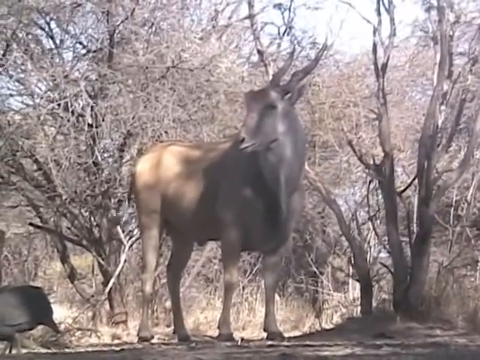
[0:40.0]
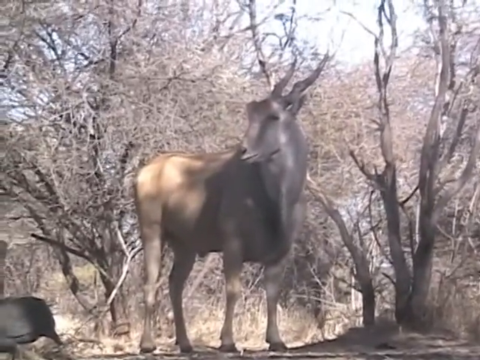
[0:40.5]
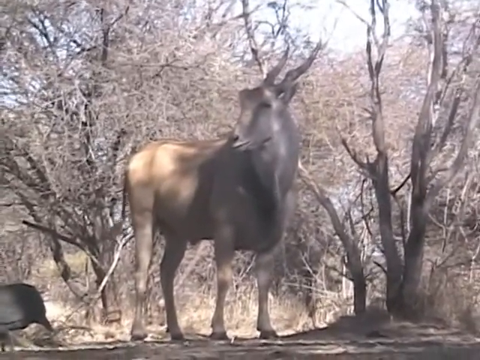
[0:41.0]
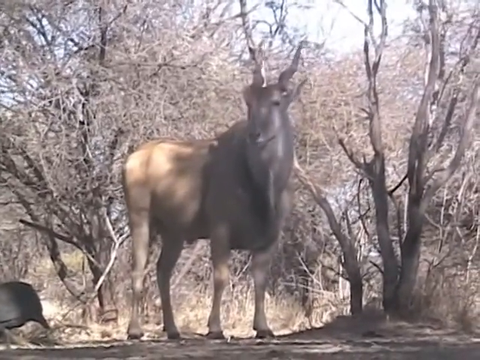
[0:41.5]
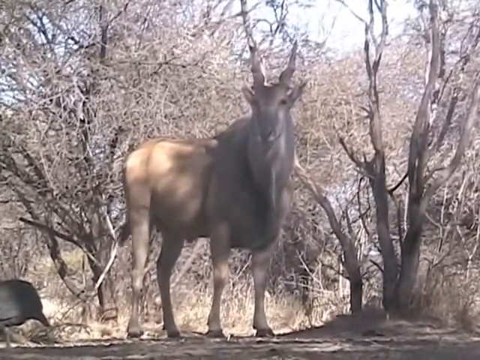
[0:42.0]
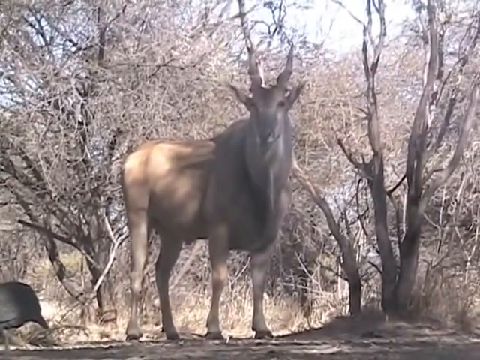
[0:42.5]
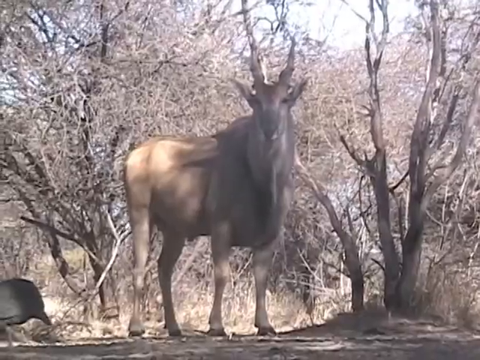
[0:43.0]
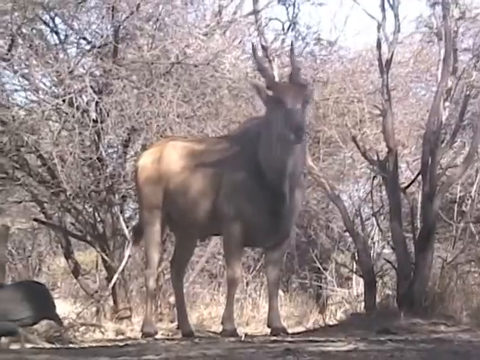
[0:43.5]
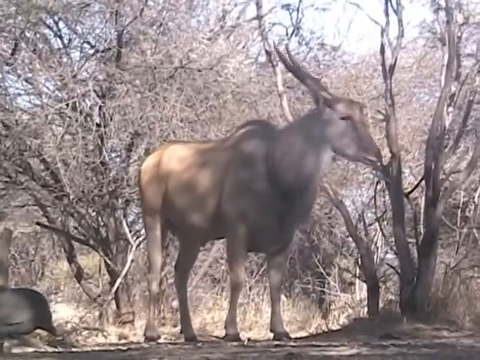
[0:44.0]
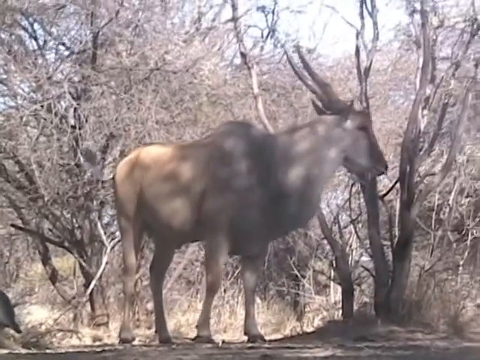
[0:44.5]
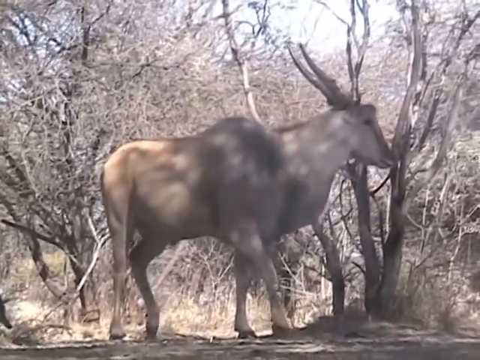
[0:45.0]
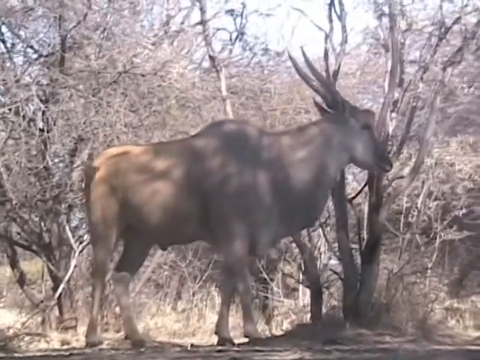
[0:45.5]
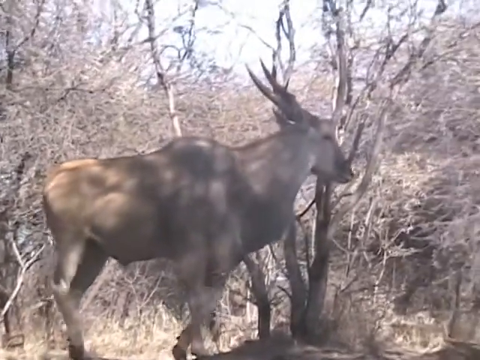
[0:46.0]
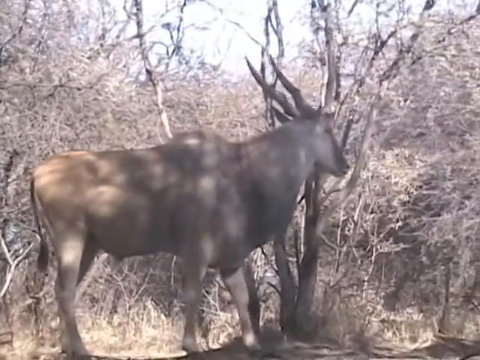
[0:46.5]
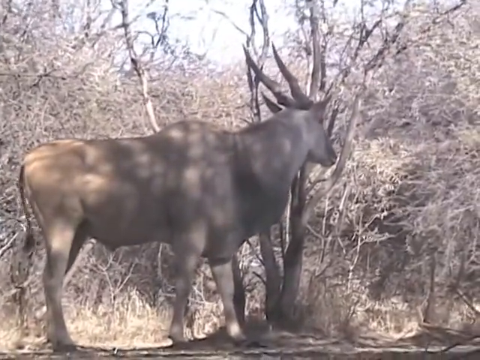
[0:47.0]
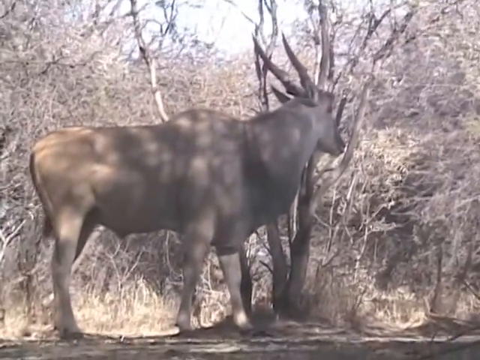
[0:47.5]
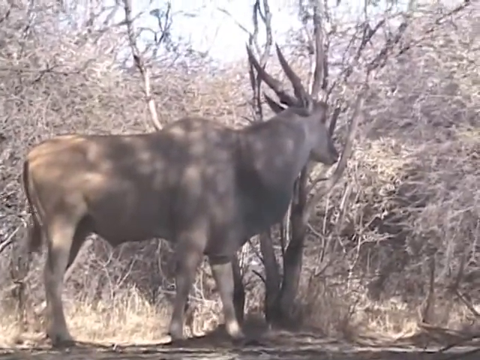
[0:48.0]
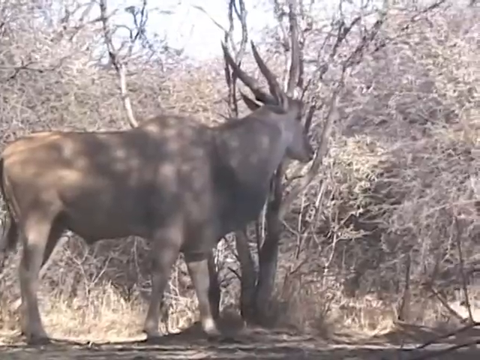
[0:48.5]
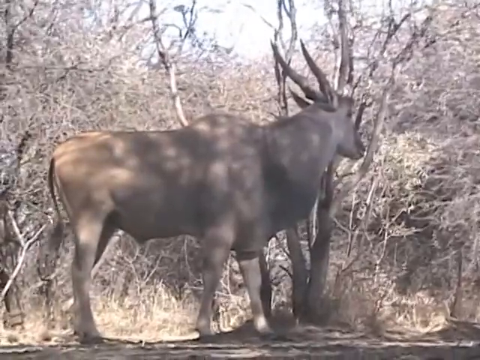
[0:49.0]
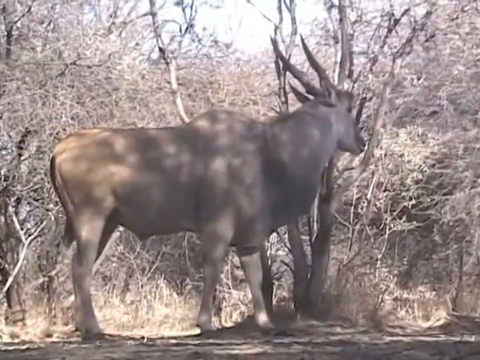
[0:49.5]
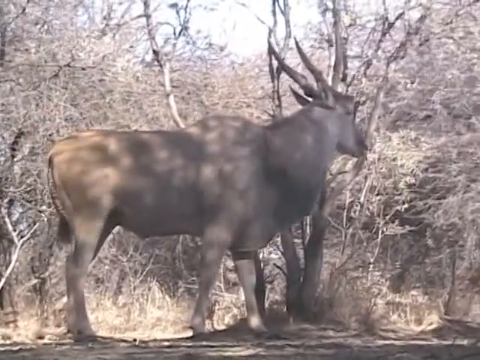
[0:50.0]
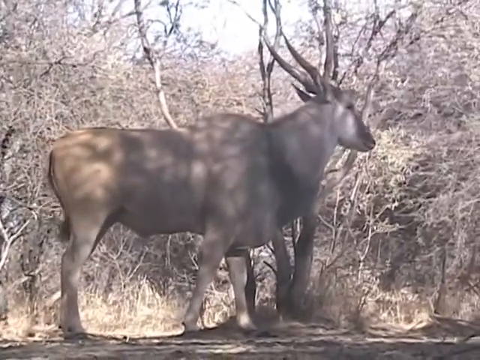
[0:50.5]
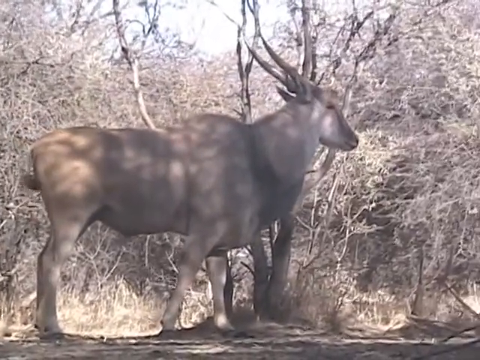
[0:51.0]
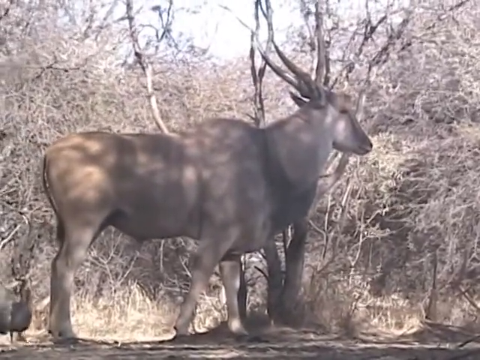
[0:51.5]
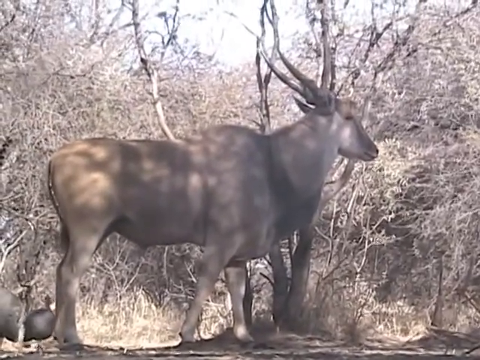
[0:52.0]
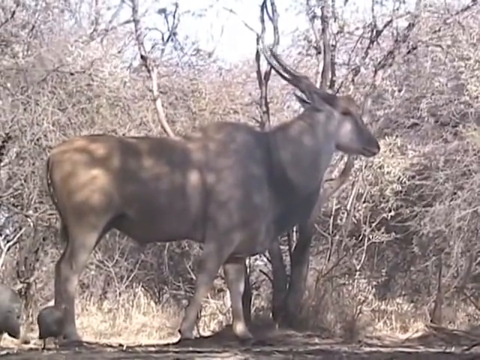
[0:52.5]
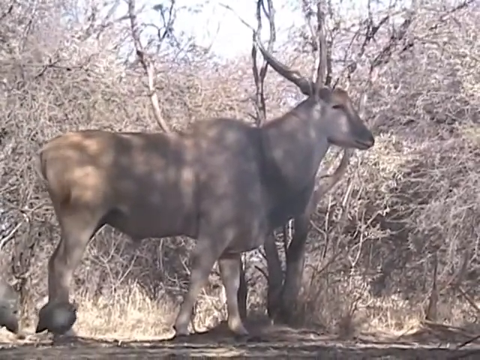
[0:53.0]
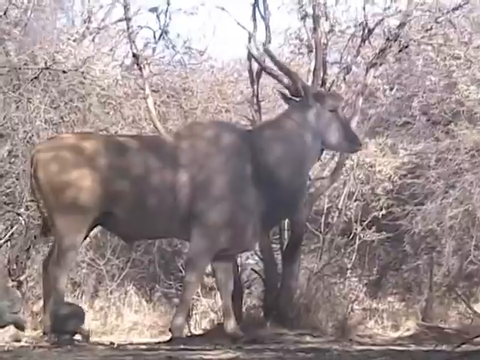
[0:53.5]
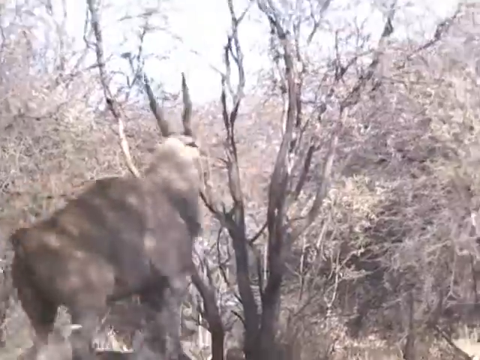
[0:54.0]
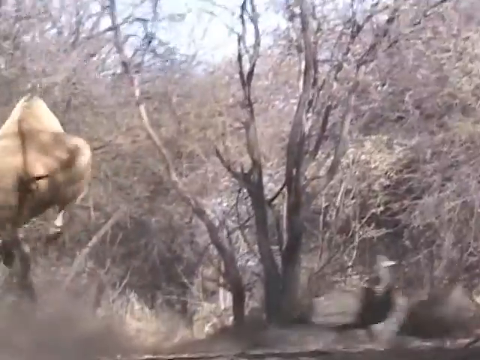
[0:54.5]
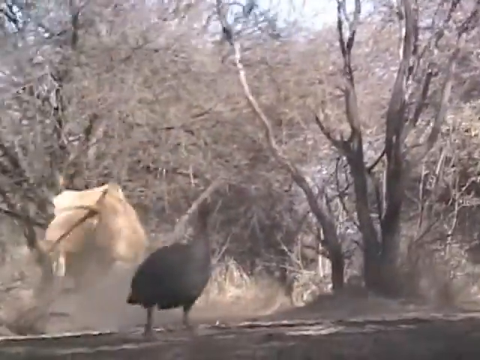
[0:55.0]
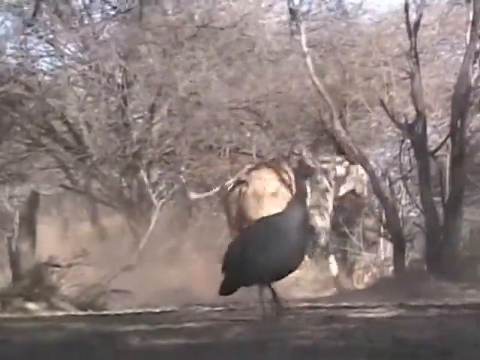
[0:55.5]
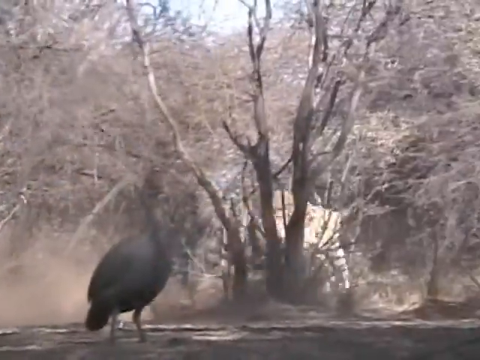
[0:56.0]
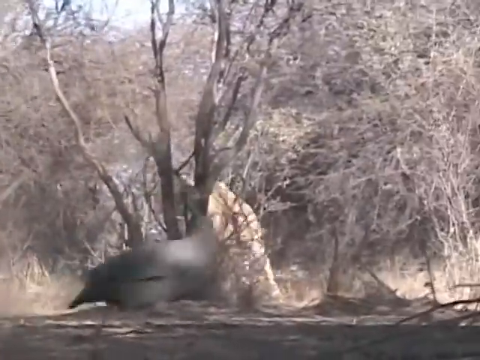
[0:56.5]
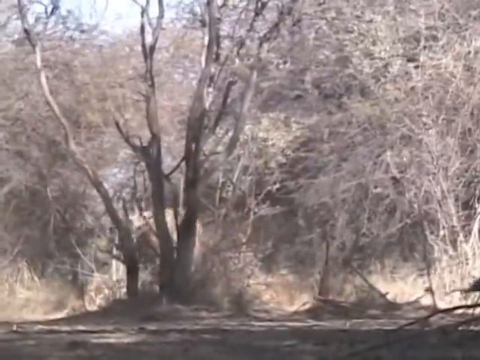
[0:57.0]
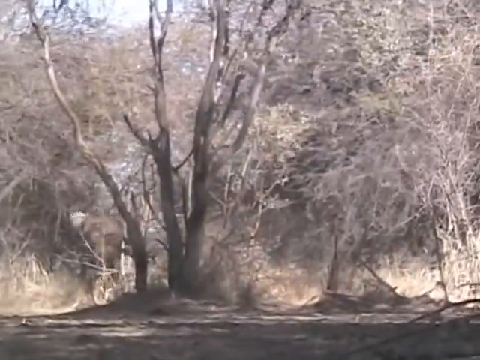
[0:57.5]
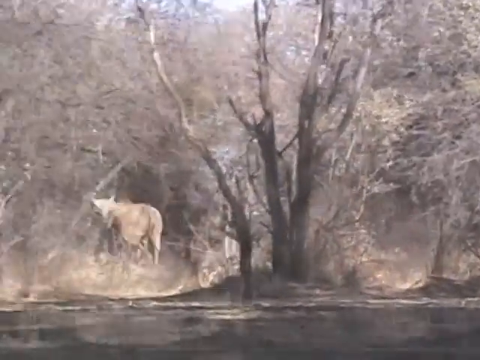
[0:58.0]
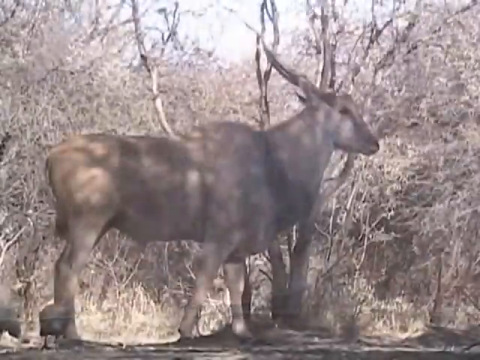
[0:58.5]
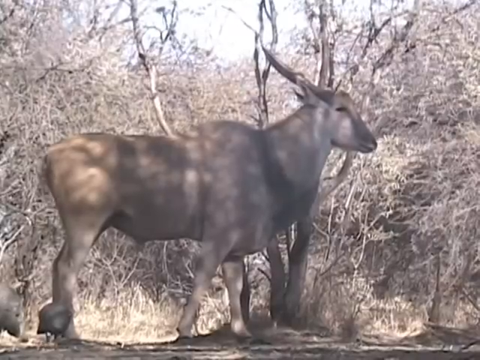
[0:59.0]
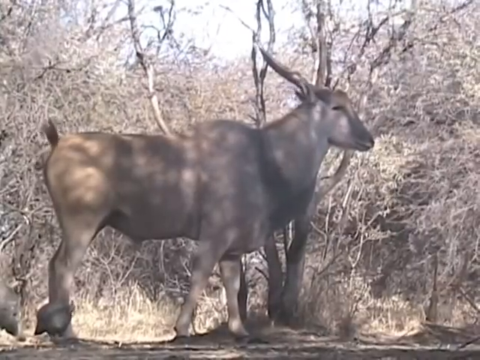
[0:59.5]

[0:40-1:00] The springbok starts walking to its left. It briefly turns towards the camera before continuing to walk to the left with two strides. It then leans forward while flicking its tail before jumping up and dashing away to the left, running extremely fast through the bush. The birds that were surrounding it scatter to the right of the camera and out of shot. It looks like the springbok was panicked by something, maybe the cameraman. The video then cuts back to the same springbok standing in the same position, this time played back in slow motion: its tail is slowly wagging and its ears are twitching back and forward very slowly, perhaps to show the same moment in slow motion. The springbok is light brown with darker brown patterns around its chest and a bit of white around its mouth; its horns are smaller and less curled than the first one's.